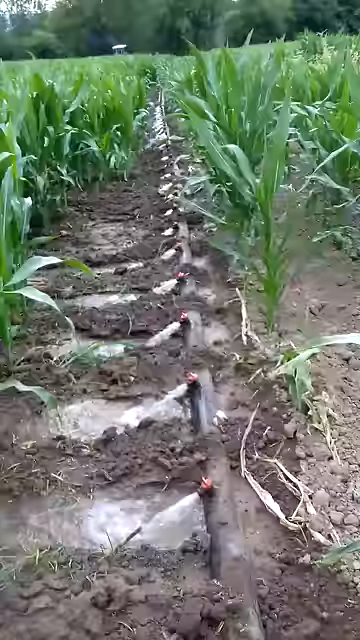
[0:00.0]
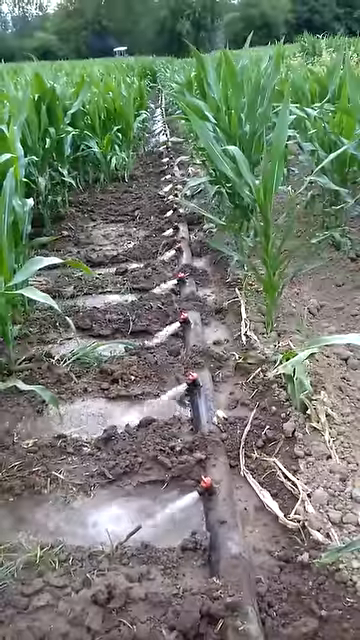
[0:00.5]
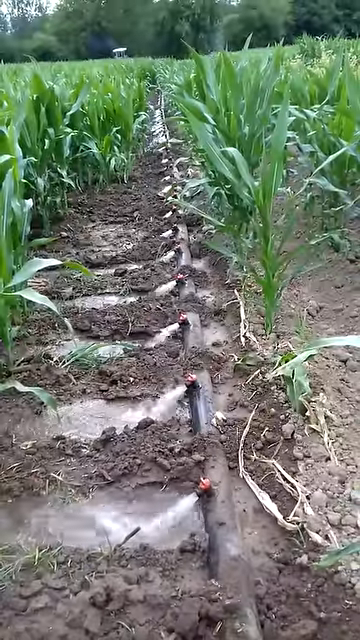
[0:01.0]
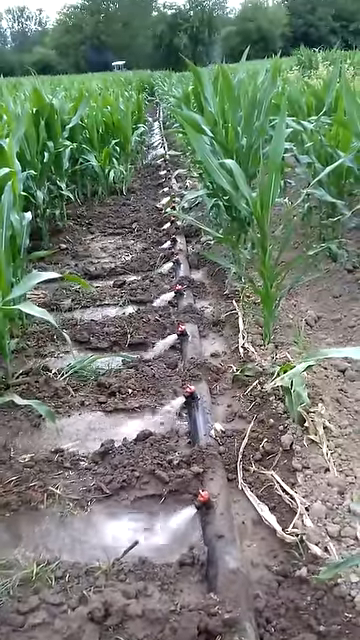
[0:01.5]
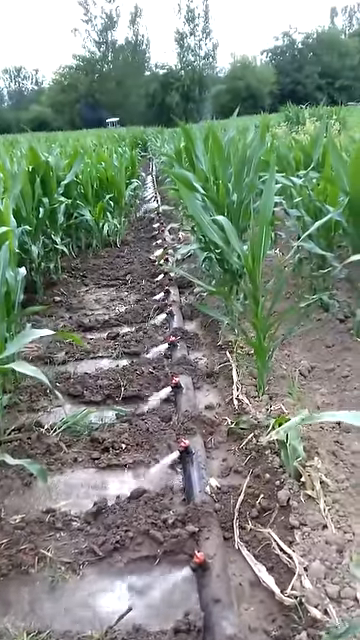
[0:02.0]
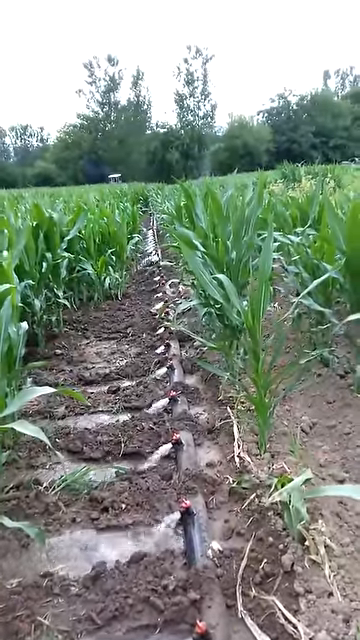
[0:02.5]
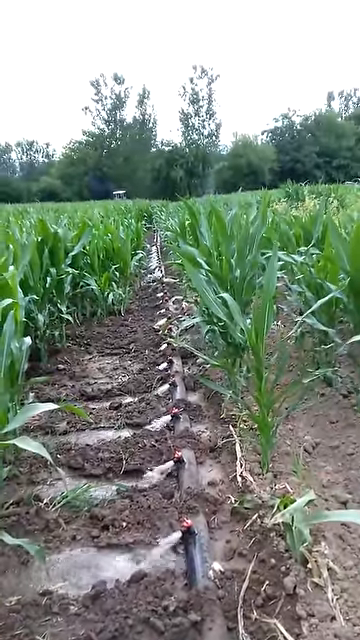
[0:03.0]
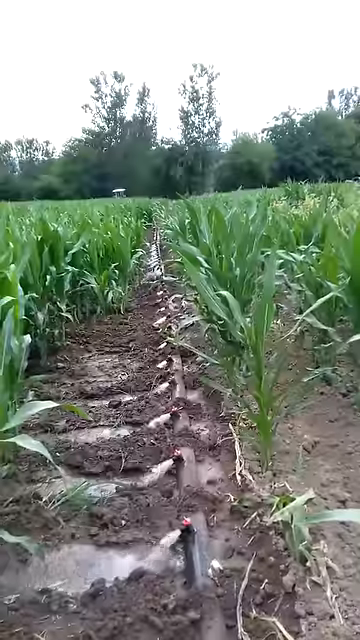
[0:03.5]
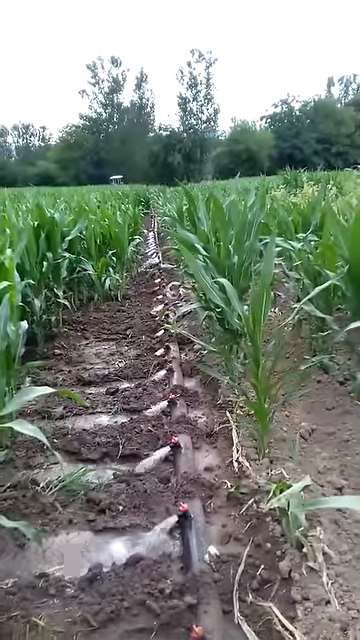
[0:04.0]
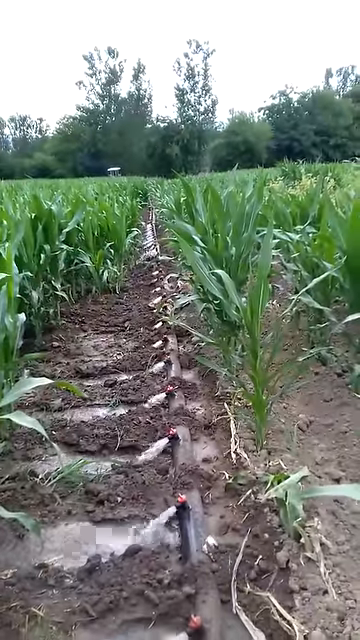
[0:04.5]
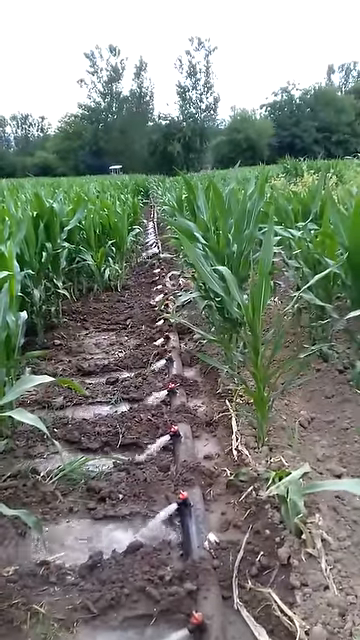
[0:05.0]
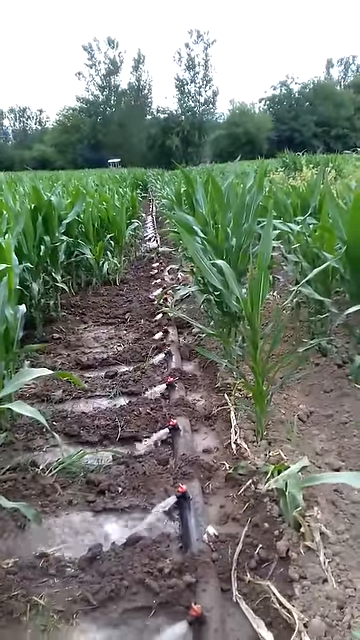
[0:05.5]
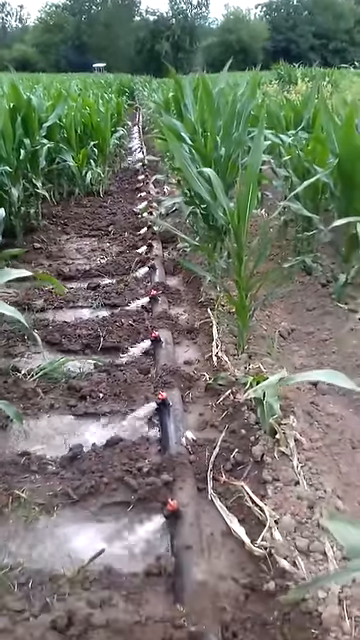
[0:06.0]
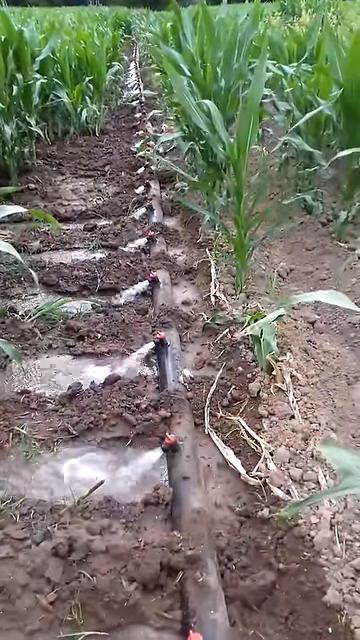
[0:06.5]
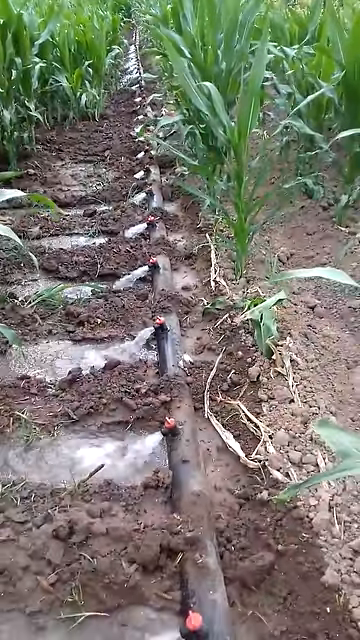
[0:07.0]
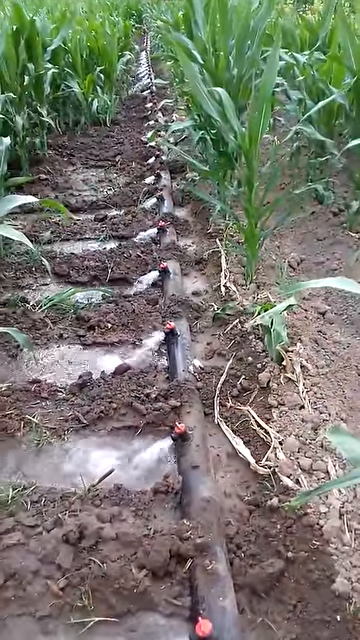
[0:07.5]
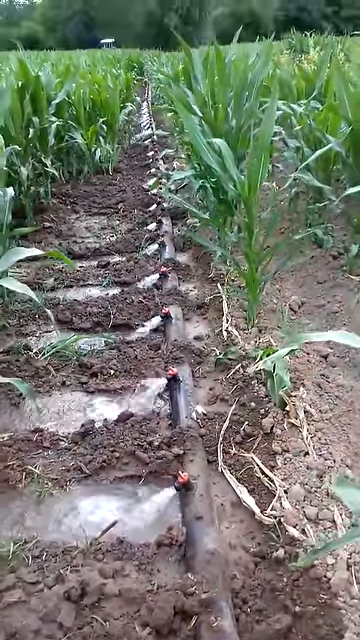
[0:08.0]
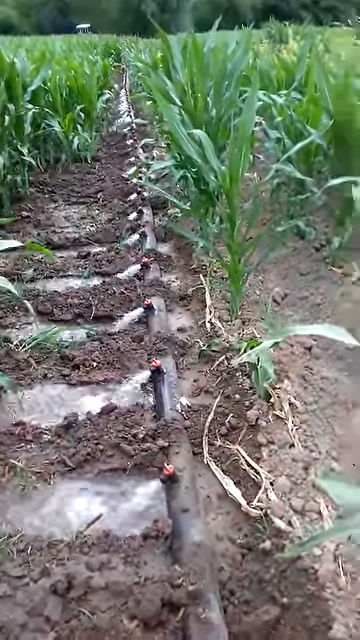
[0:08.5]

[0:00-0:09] A title in a foreign language appears over an irrigation system: a long pipe with many spigots along its length pouring water into a field of produce that looks like it could possibly be corn. The field is fairly wide, and the plants are not quite mature. Some spigots gush more water than others, and there appear to be divots in the ground where the water has been pouring repeatedly over time. On the side the spigots face, the dirt is moist and rich-looking, while the side facing away looks very dry.